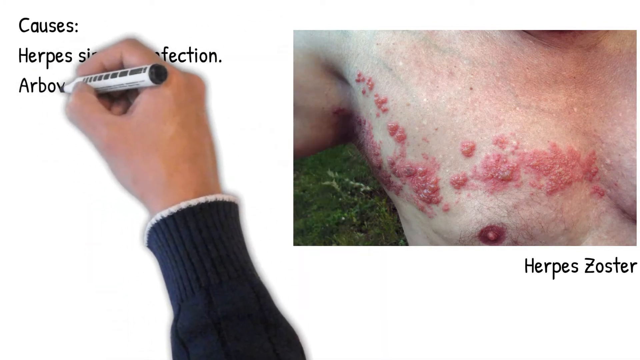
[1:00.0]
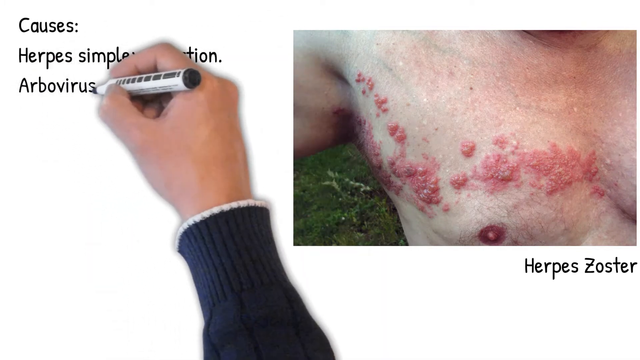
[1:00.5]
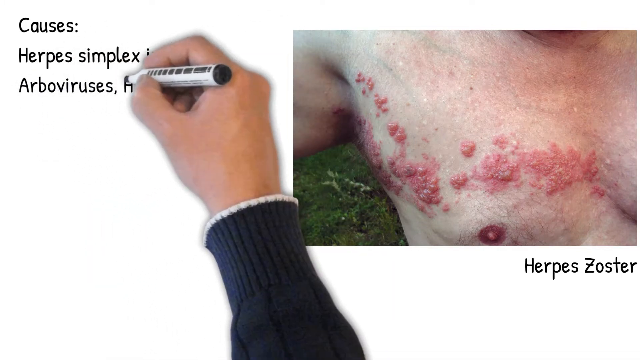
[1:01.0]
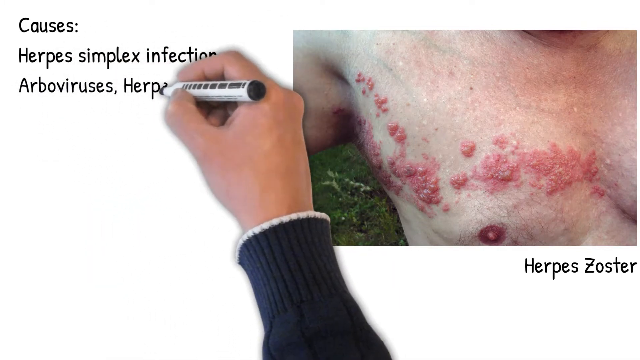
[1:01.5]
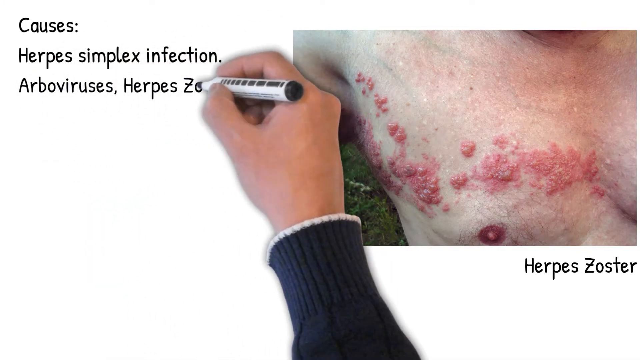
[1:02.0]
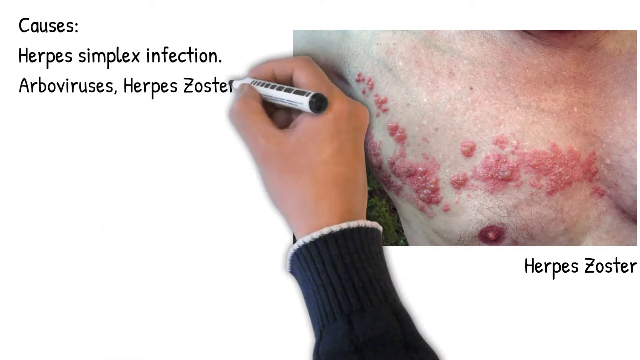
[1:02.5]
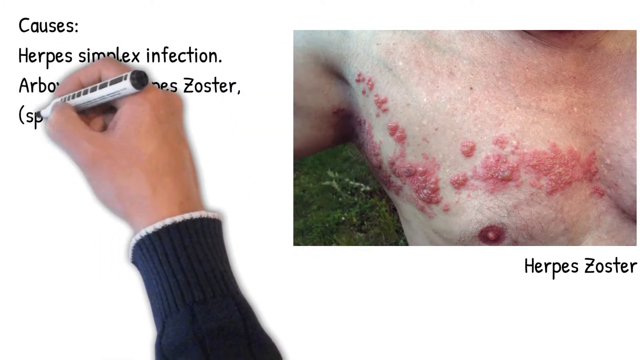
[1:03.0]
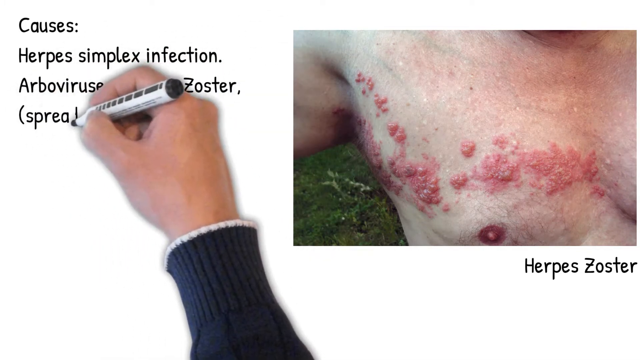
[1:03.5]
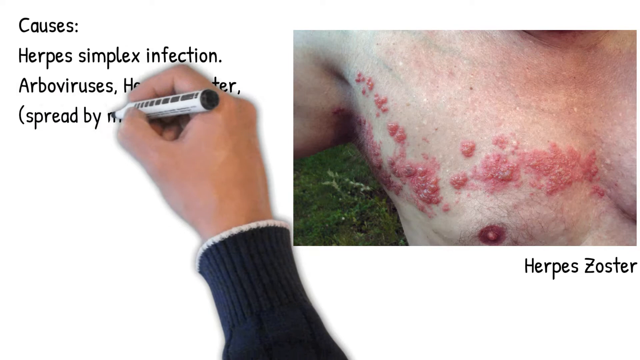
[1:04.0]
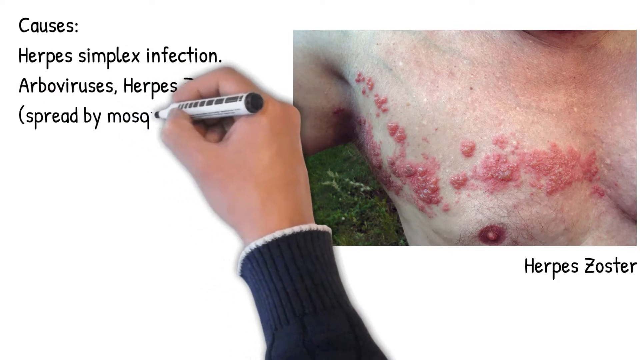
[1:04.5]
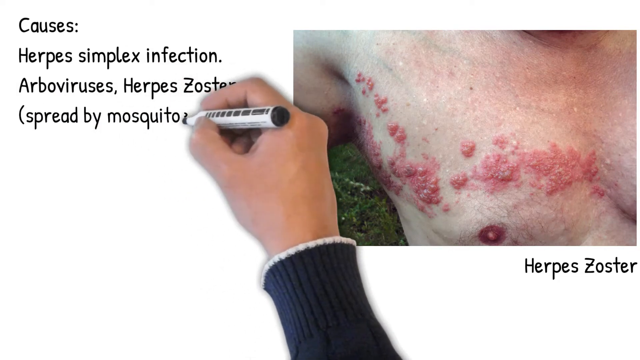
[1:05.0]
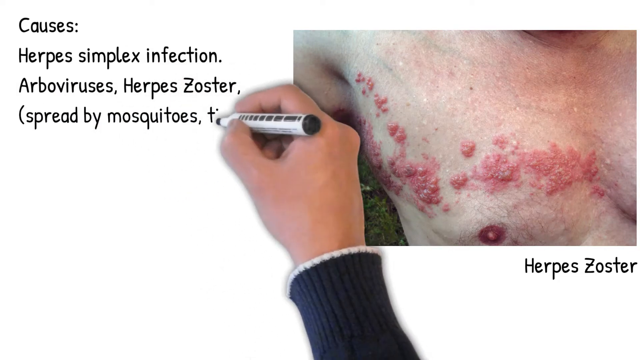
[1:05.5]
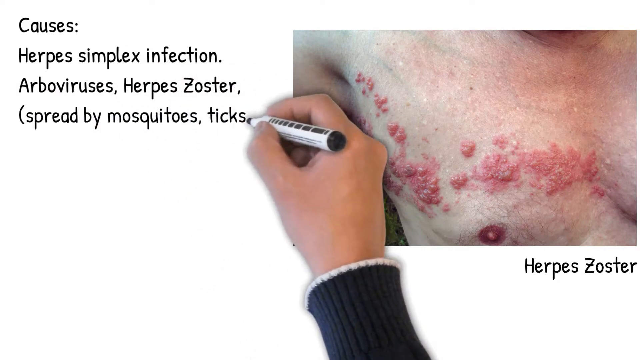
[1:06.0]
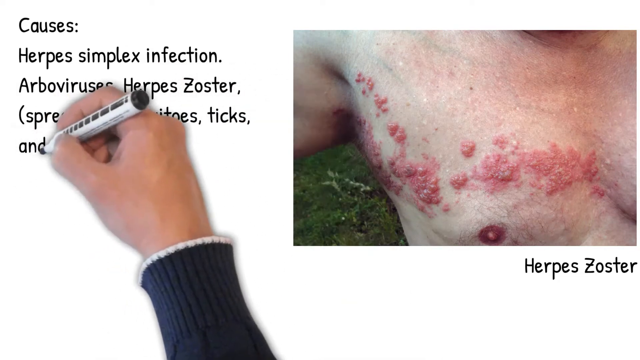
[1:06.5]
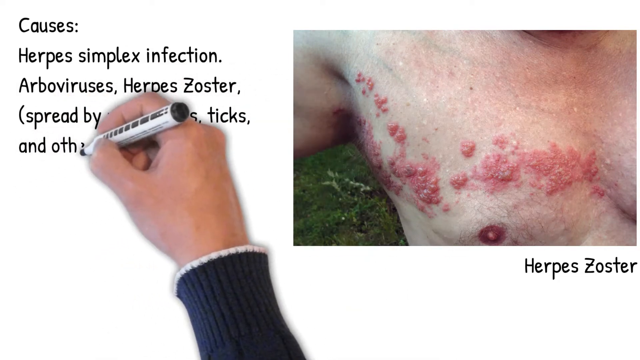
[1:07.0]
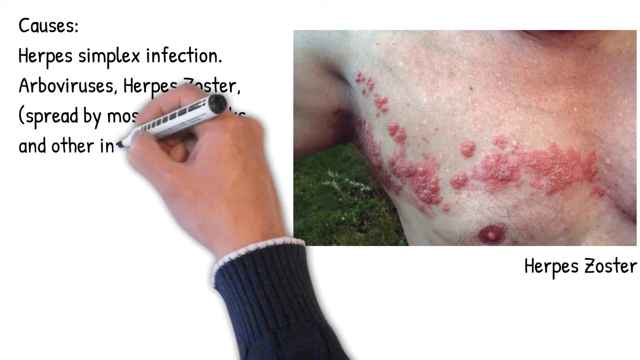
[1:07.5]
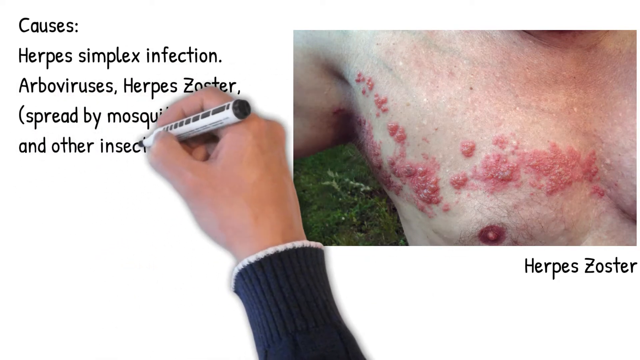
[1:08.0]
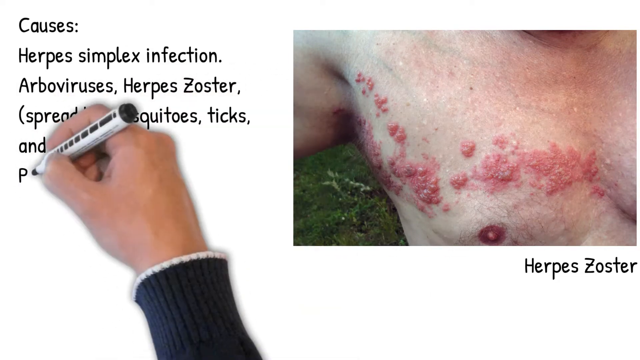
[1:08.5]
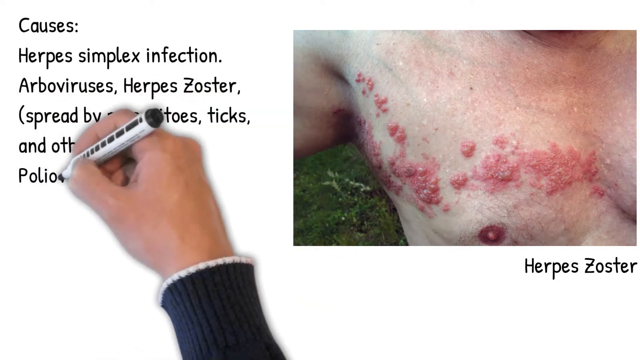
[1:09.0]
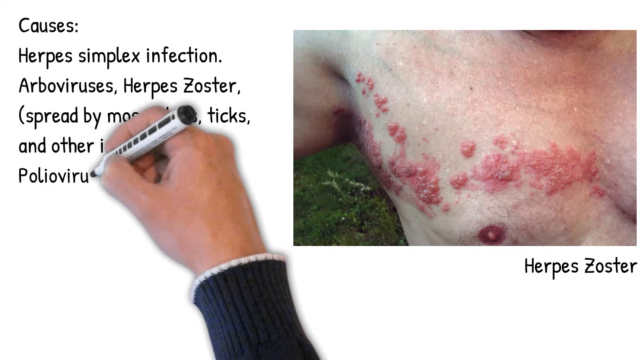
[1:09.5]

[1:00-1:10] The picture of the man's chest with herpes zoster lesions is shown. The lesions look like raised red bumps, not like chicken pox, and are almost in clusters. The text says "the causes is a herpes simplex infection, arbor virus, herpes zoster is spread by mosquitoes, ticks, and other insects". The hand with the marker keeps writing all of this down.